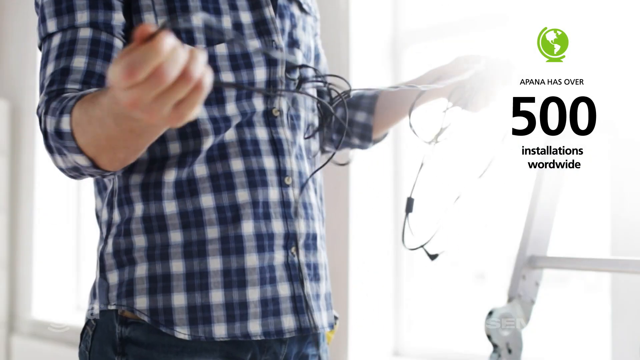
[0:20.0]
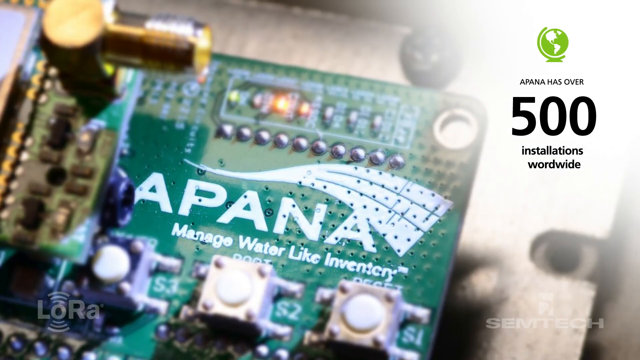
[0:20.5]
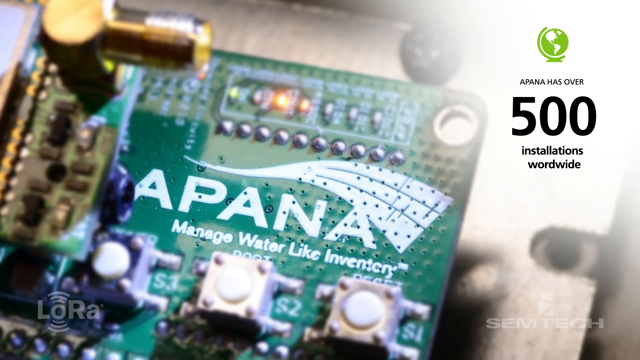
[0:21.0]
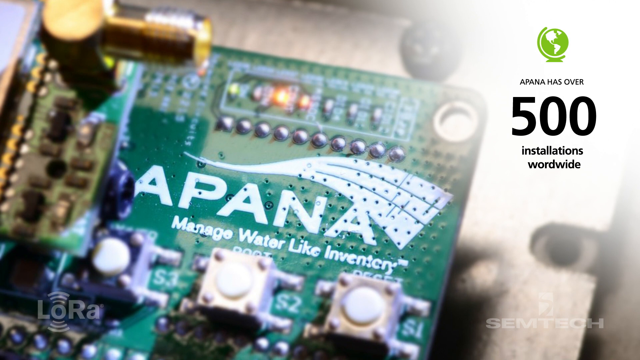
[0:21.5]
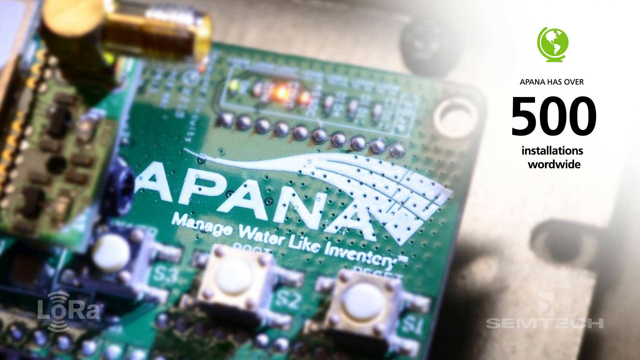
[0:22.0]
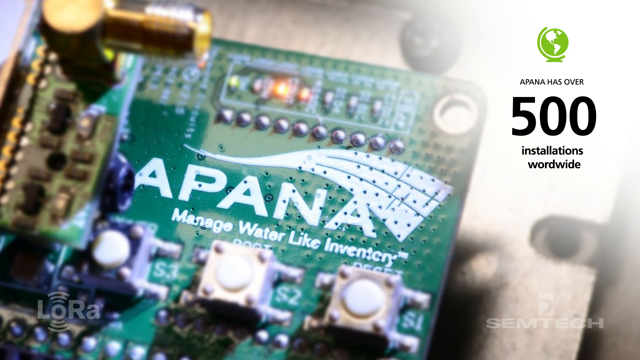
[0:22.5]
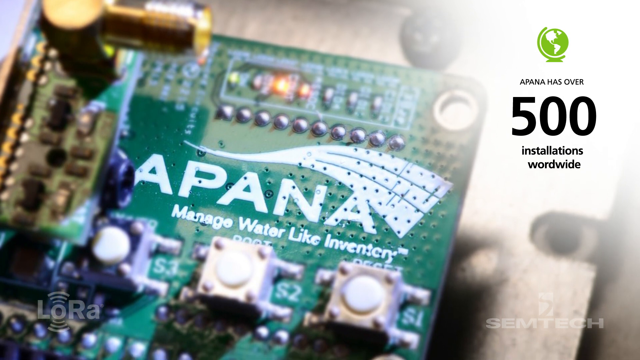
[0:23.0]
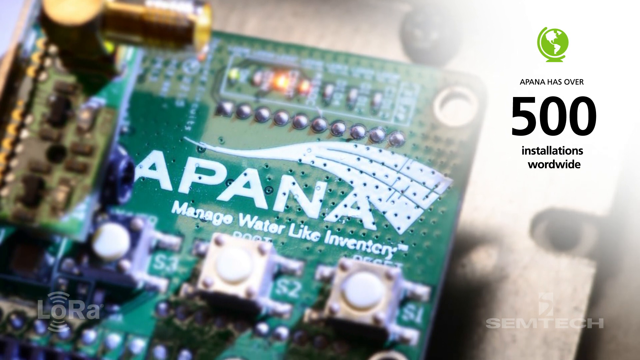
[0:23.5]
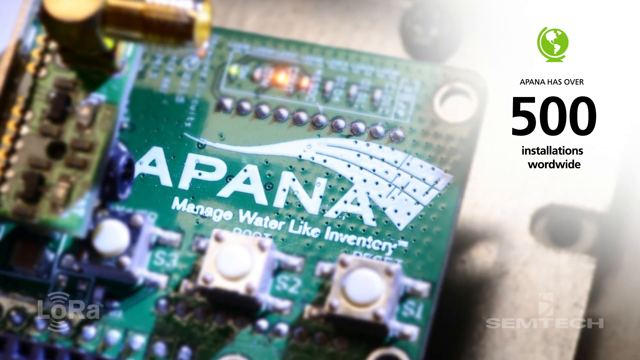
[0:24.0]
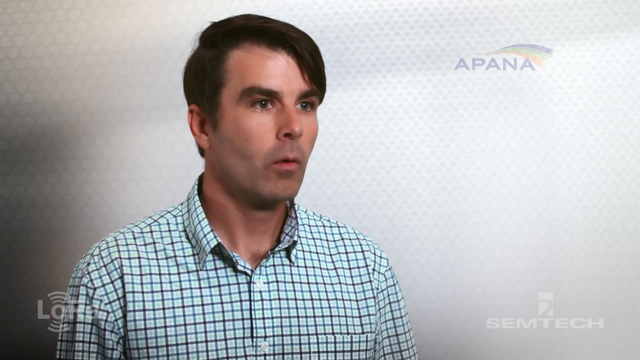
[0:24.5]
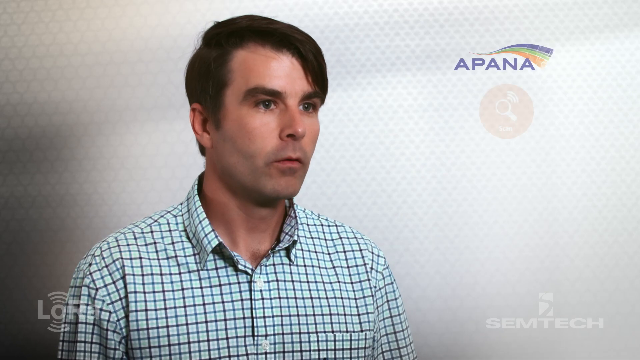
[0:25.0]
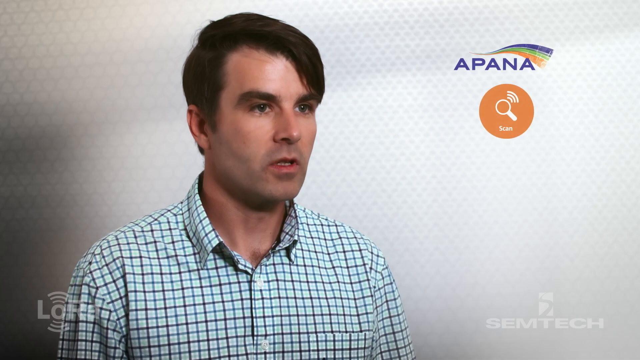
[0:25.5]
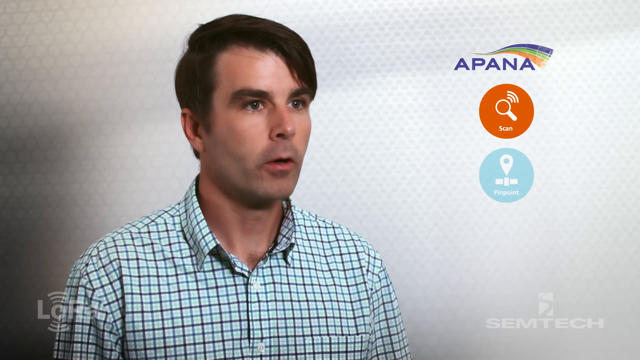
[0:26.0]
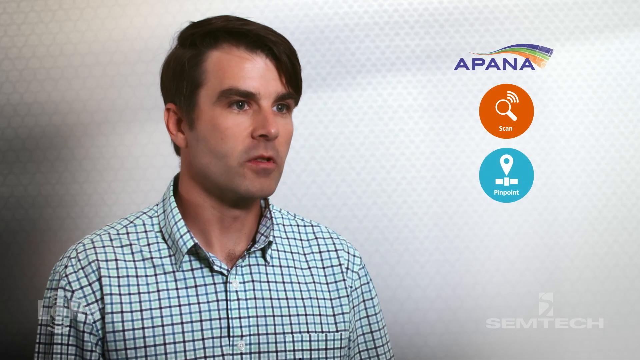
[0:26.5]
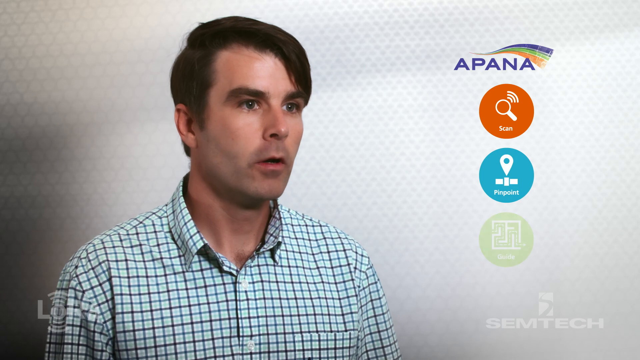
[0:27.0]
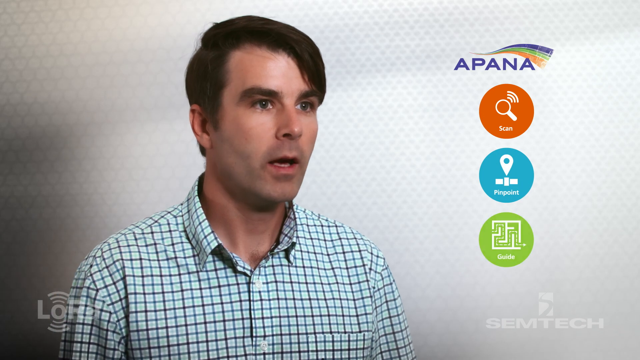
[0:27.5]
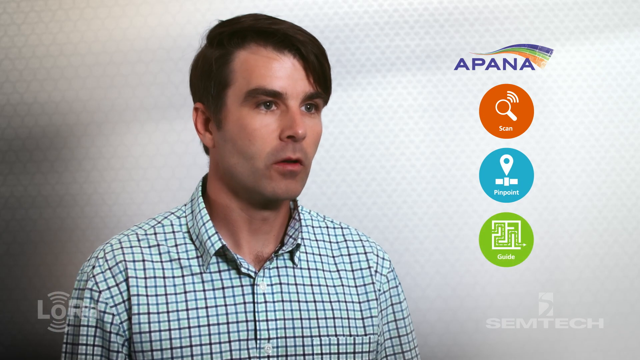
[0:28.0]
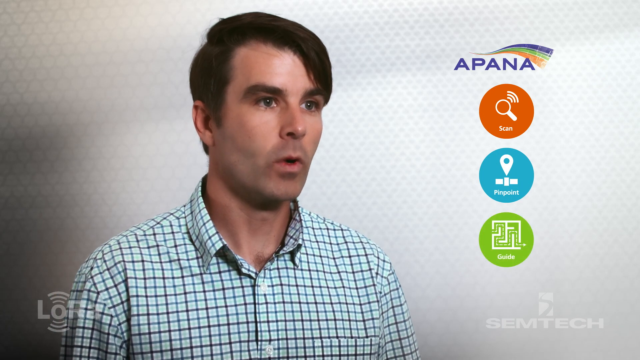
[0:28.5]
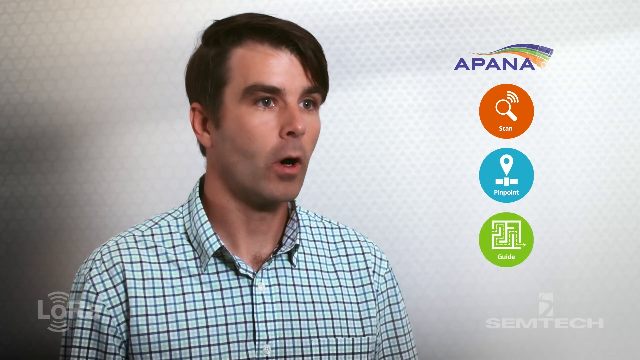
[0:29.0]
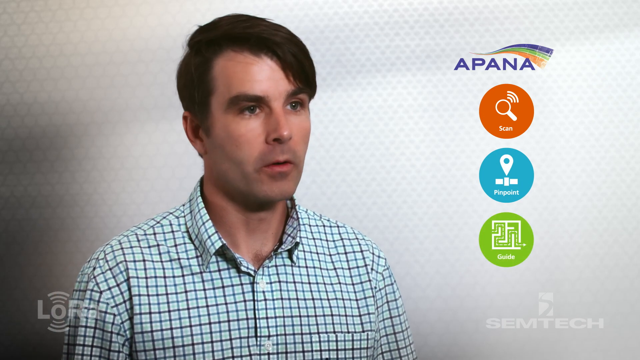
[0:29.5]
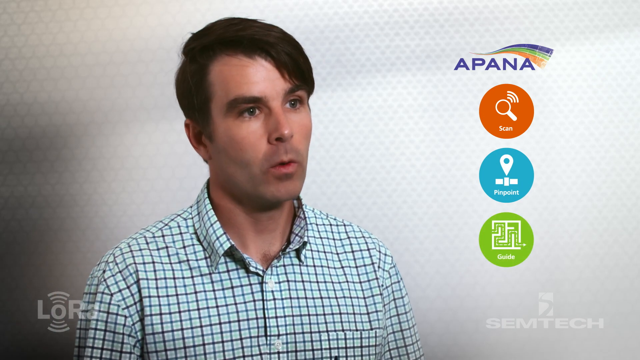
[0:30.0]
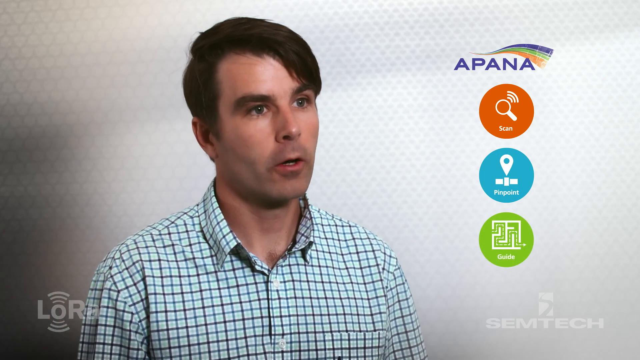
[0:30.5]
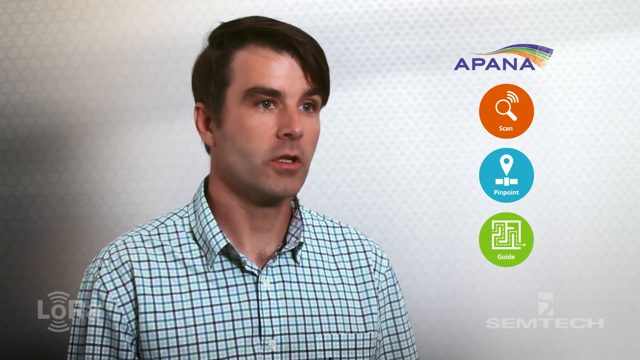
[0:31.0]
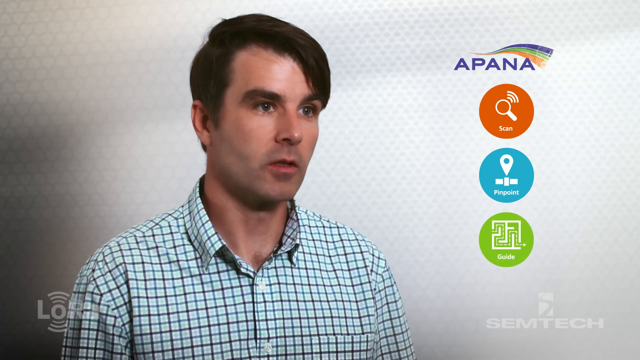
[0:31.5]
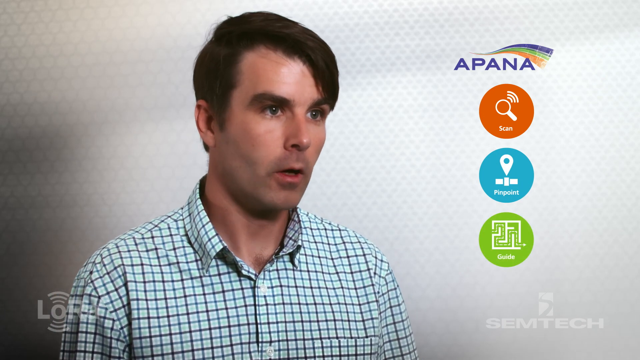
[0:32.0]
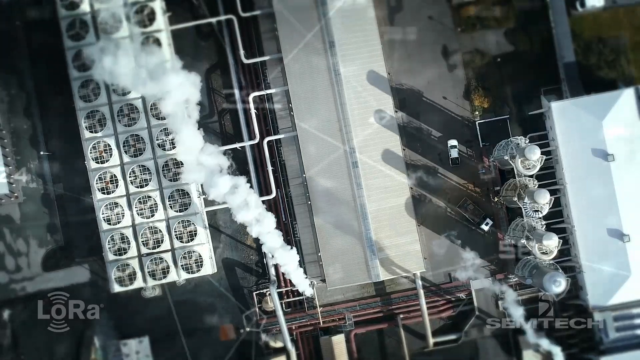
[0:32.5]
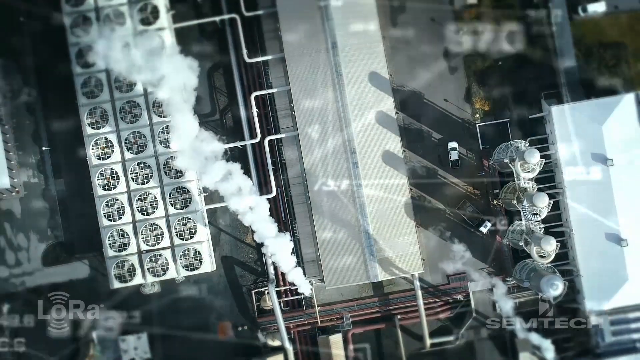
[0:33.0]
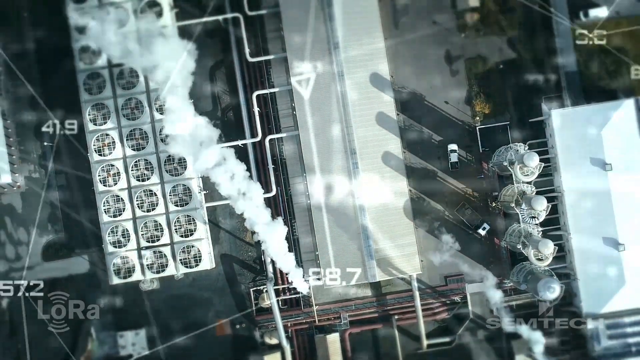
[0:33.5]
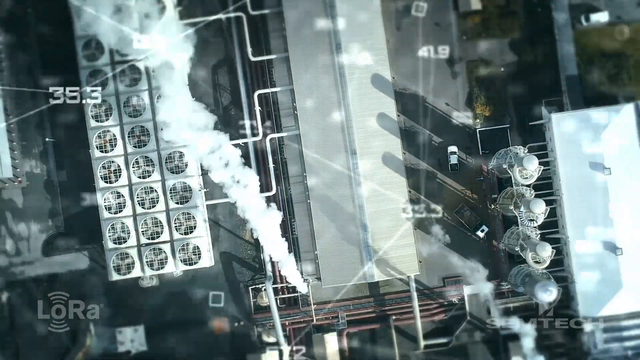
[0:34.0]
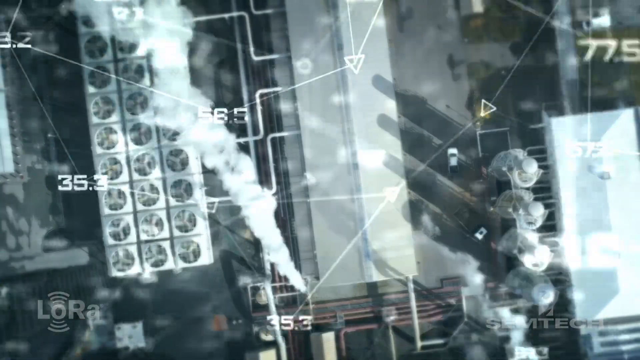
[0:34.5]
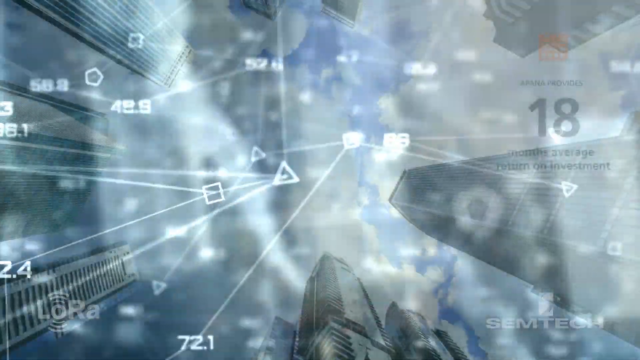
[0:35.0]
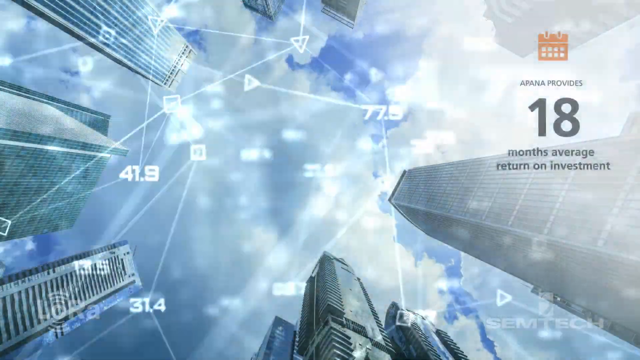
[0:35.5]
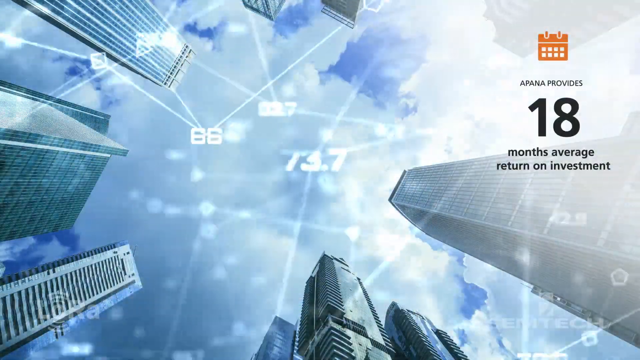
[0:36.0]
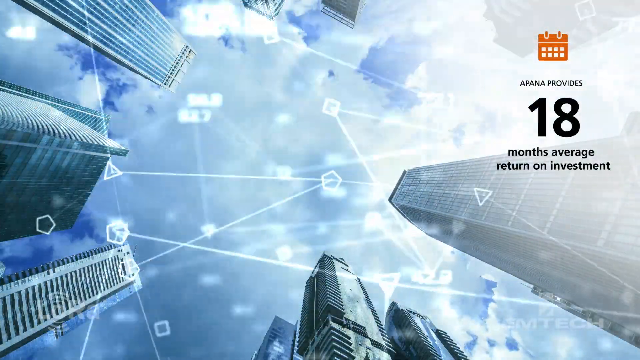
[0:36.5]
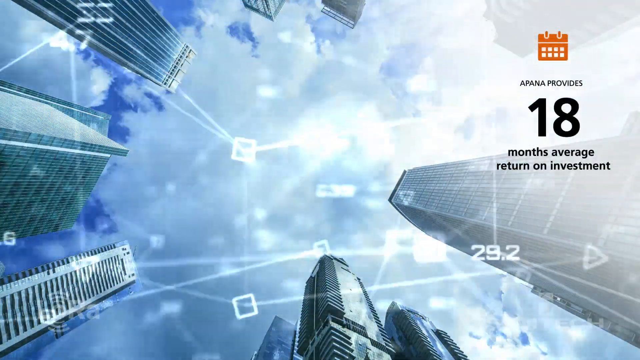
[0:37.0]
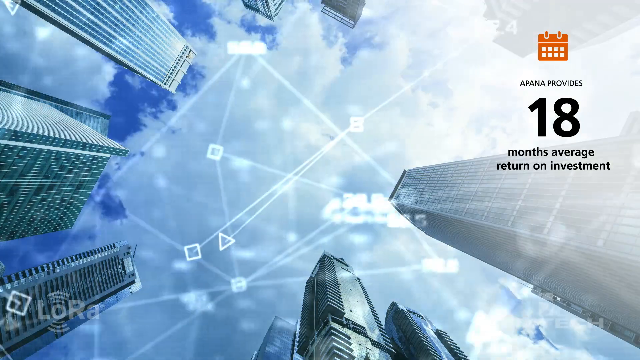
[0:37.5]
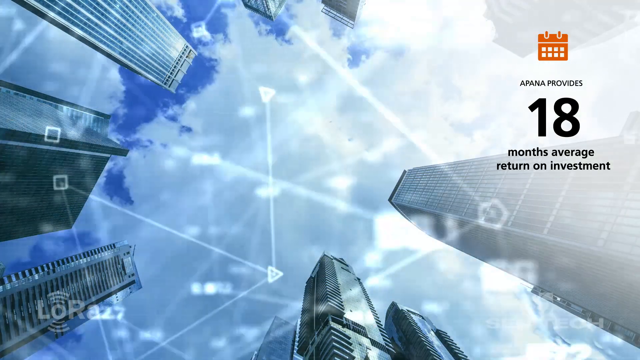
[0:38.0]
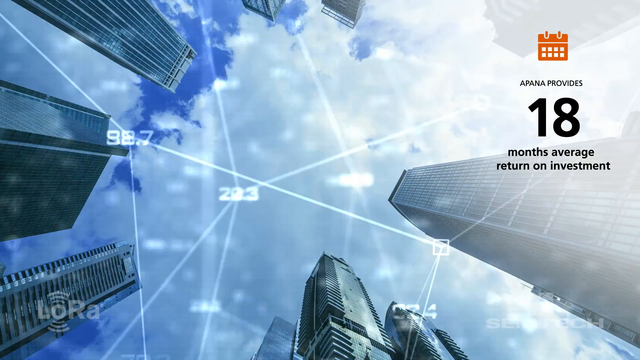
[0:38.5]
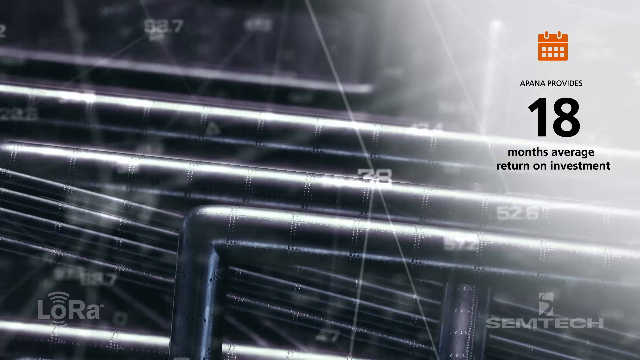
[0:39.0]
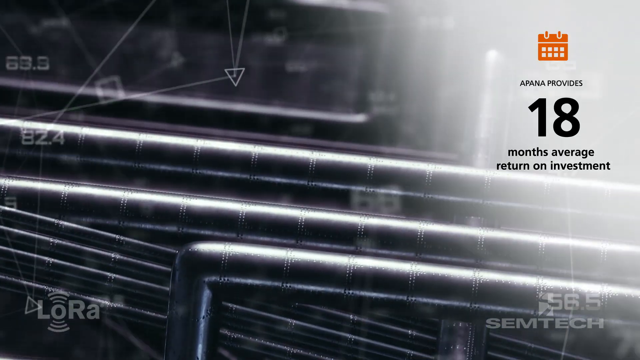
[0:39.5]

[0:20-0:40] The video, by Apana, a smart meter company, continues. On the right side of the screen, text says "Apana has over 500 installations worldwide," with a green globe above it. To the left, a person in a blue and white checkered shirt is stretching a cord. A circuit board with "Apana" on it is shown. A LORA watermark is in the lower left-hand corner and a Simtek watermark in the lower right-hand corner. Matt Maynard-Peterson, the CTO of Apana, appears. Three icons then appear in turn: "Scan" in orange, "Pinpoint" in medium green, and "Guide" in light green.